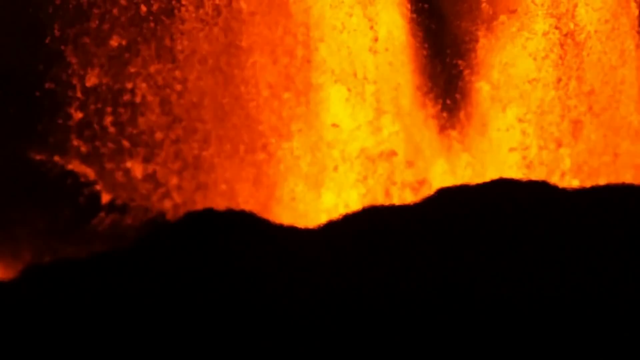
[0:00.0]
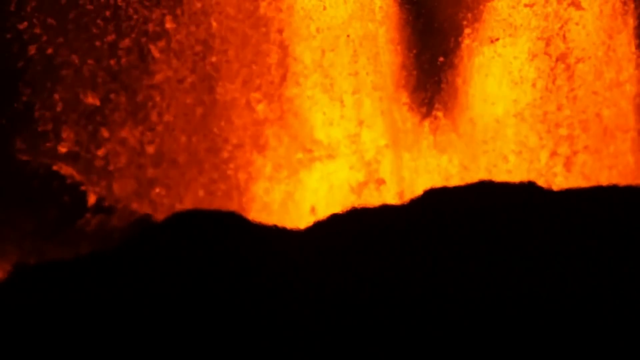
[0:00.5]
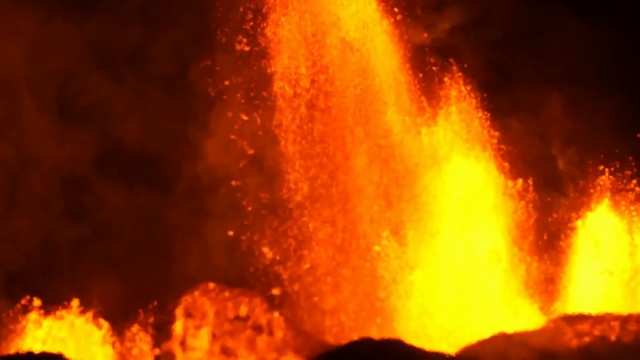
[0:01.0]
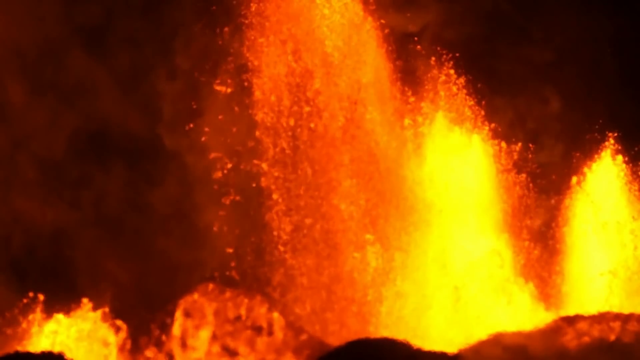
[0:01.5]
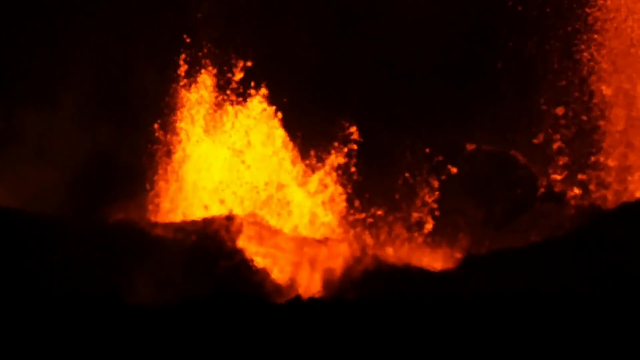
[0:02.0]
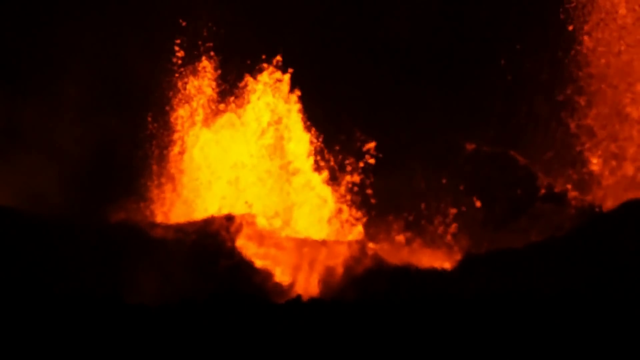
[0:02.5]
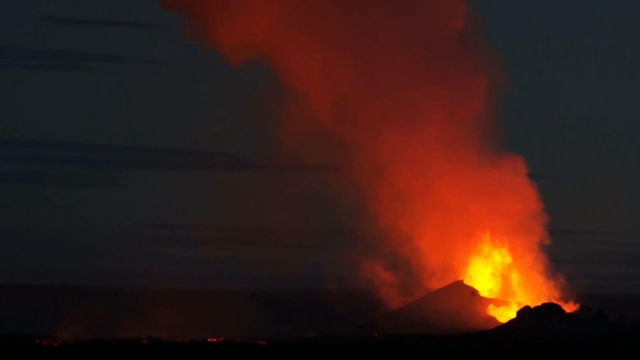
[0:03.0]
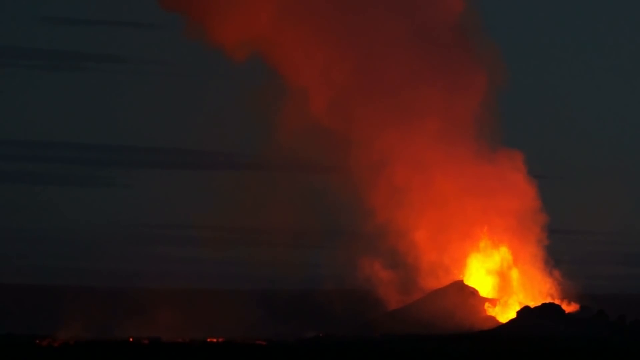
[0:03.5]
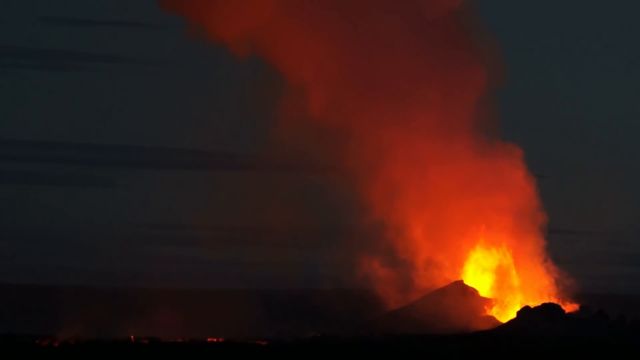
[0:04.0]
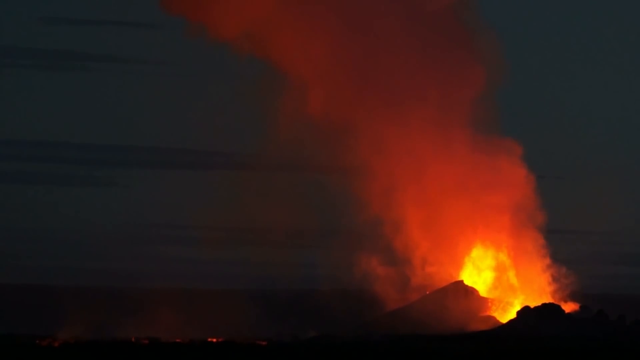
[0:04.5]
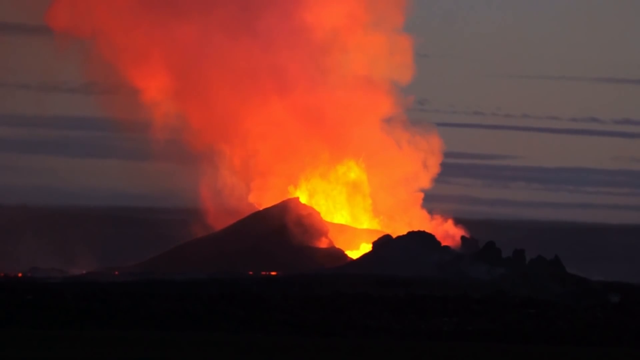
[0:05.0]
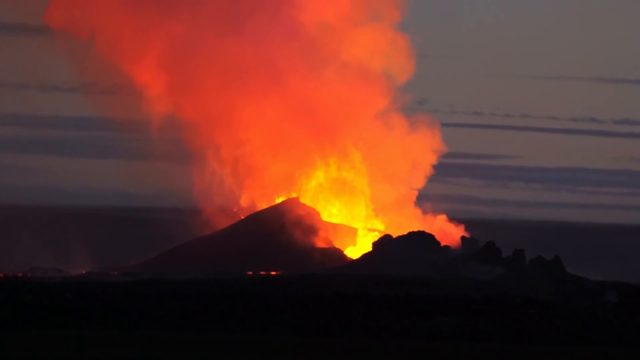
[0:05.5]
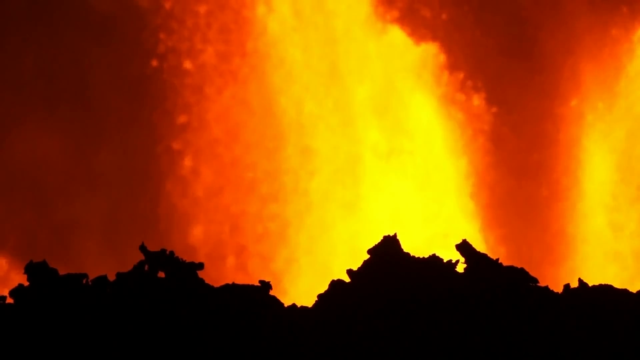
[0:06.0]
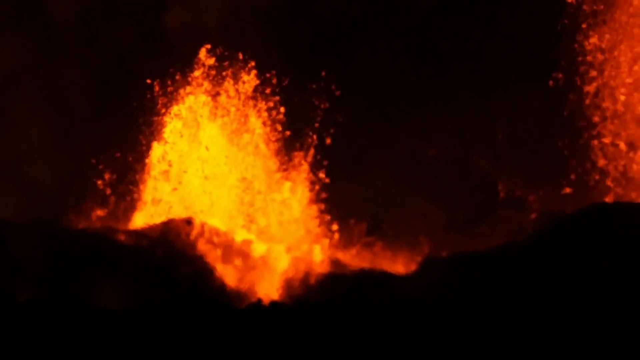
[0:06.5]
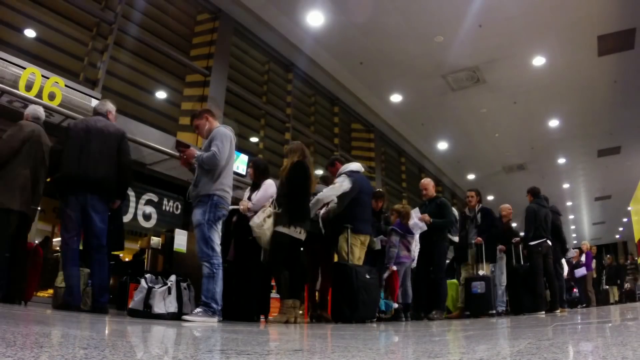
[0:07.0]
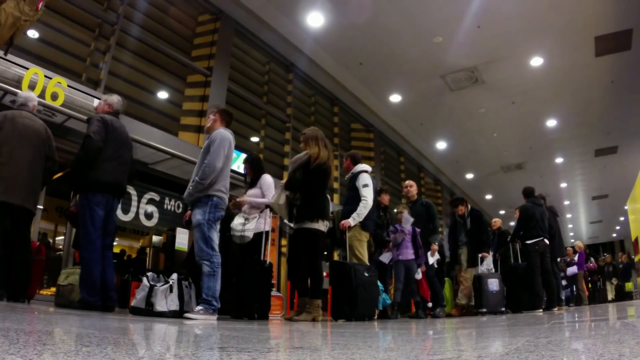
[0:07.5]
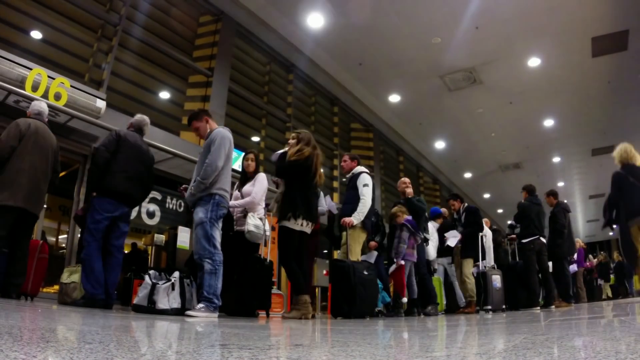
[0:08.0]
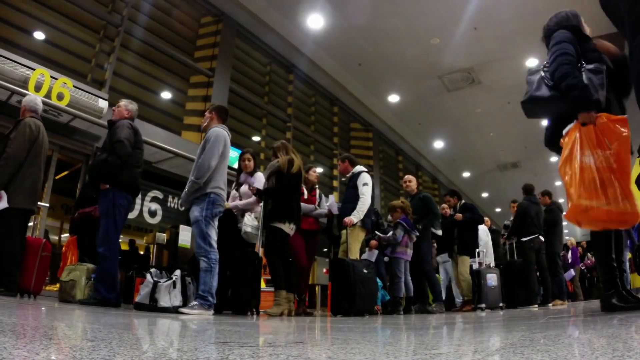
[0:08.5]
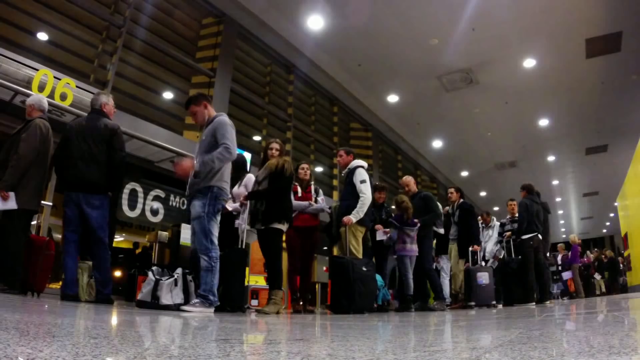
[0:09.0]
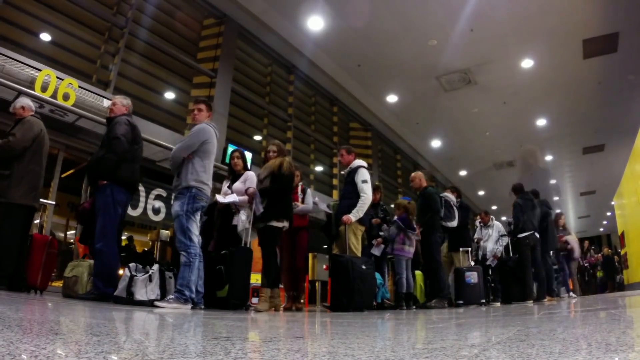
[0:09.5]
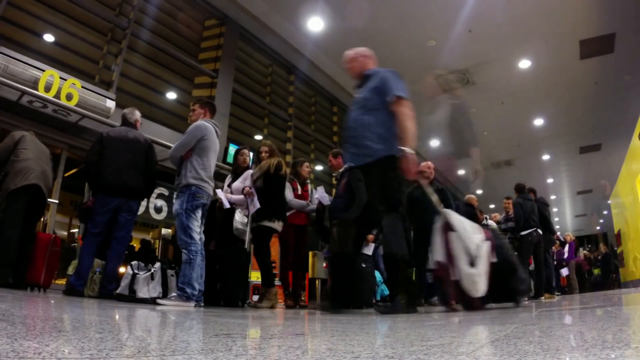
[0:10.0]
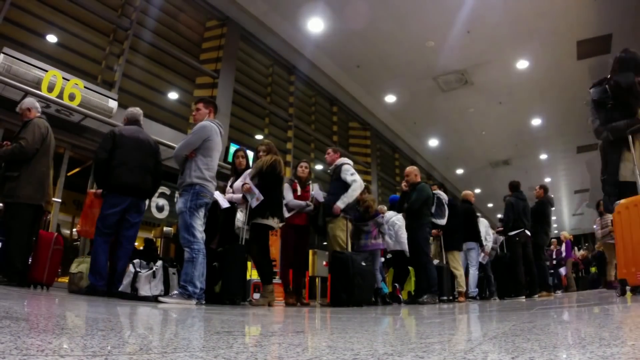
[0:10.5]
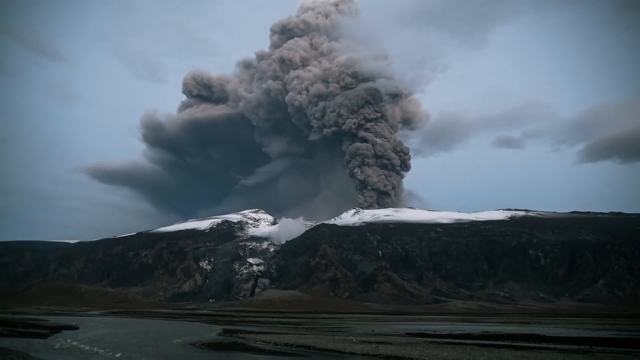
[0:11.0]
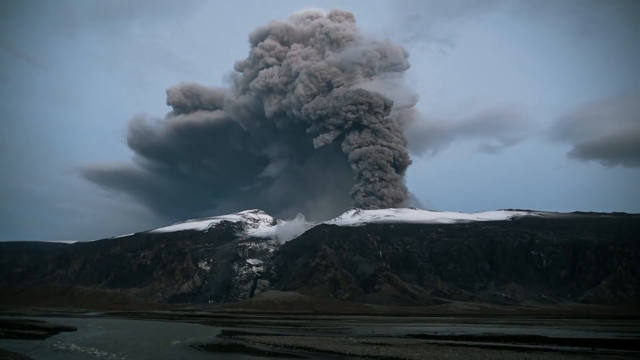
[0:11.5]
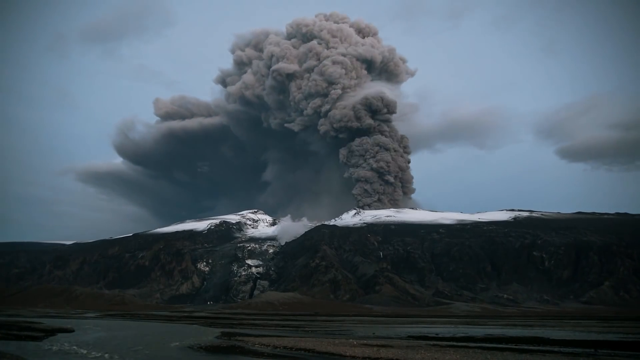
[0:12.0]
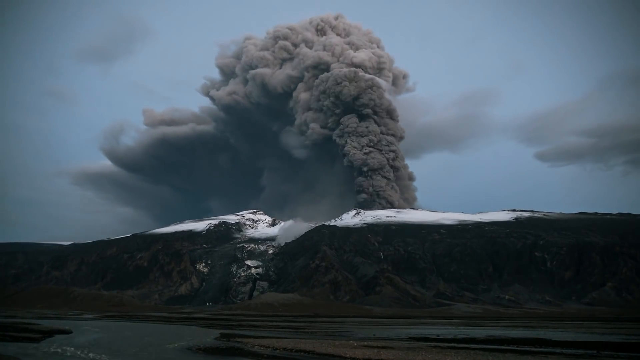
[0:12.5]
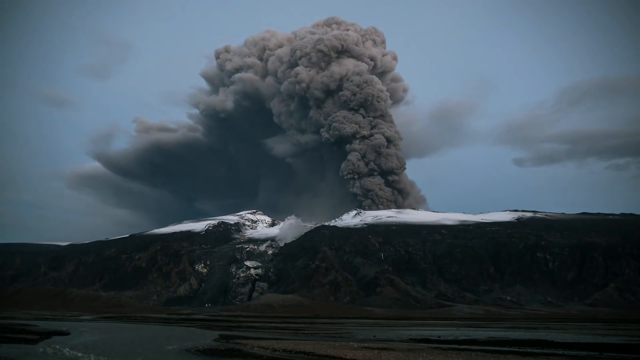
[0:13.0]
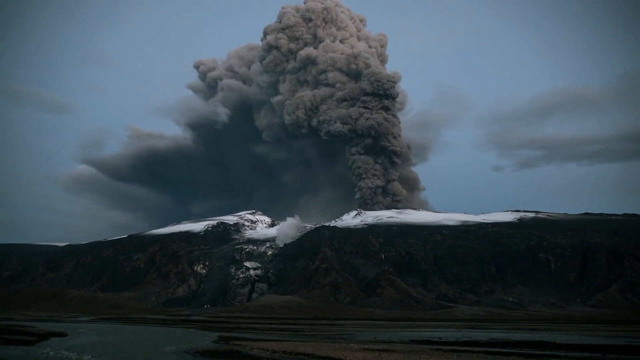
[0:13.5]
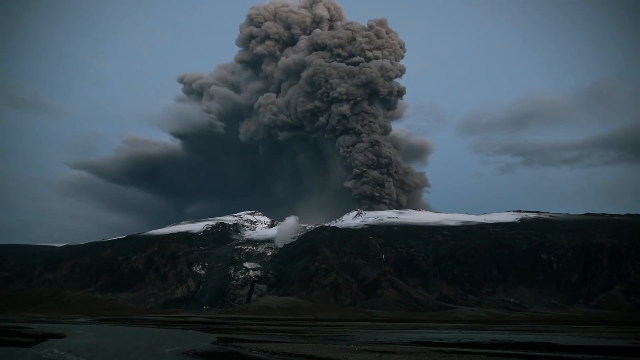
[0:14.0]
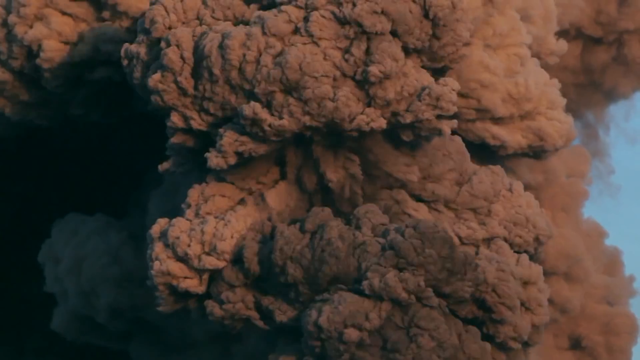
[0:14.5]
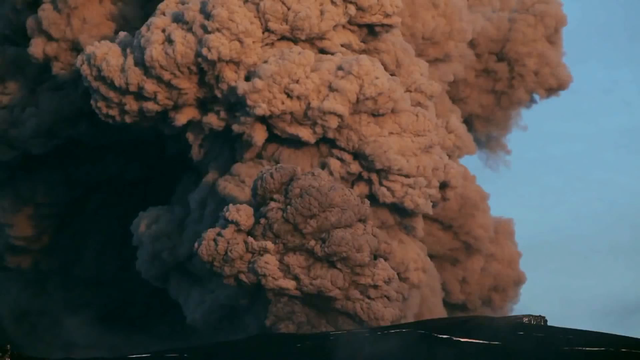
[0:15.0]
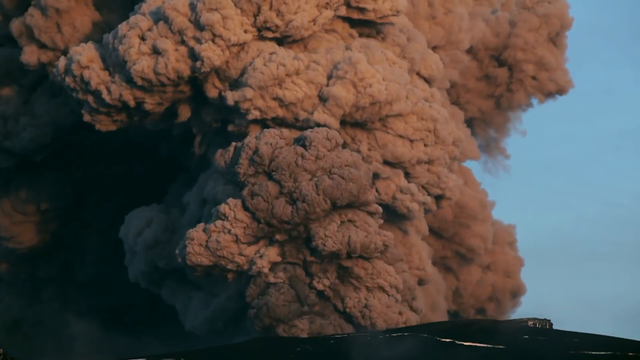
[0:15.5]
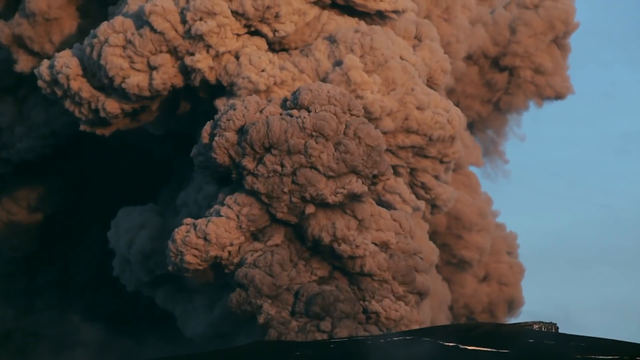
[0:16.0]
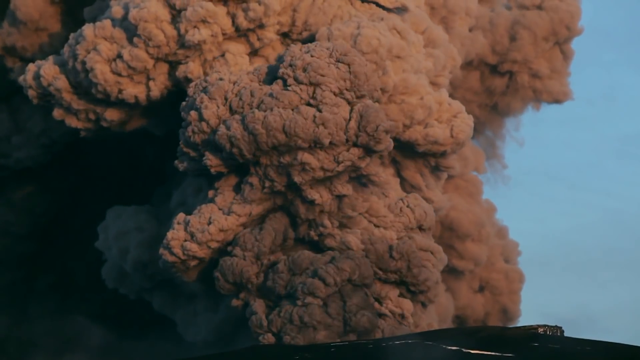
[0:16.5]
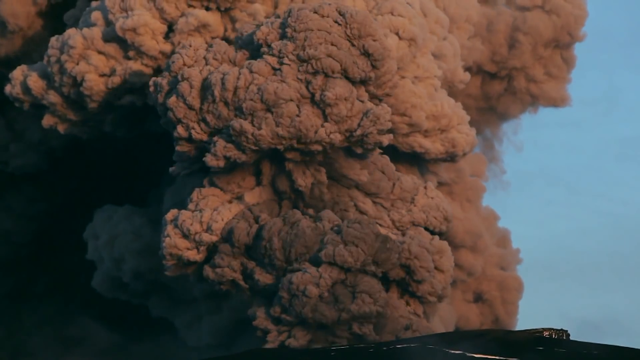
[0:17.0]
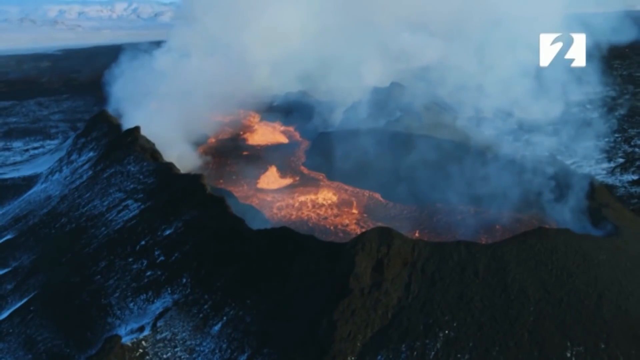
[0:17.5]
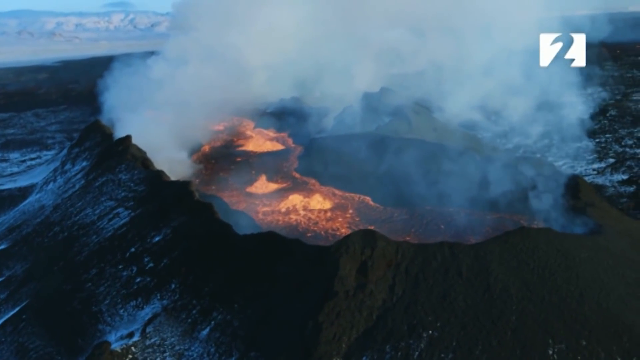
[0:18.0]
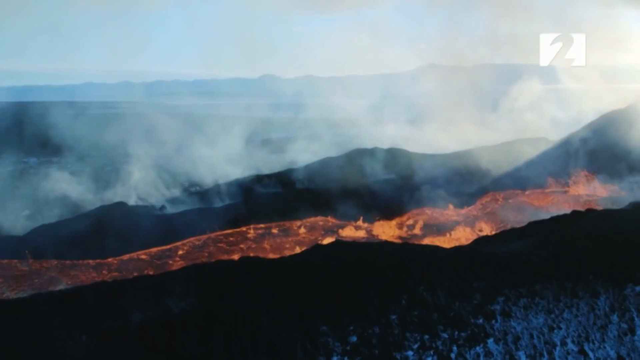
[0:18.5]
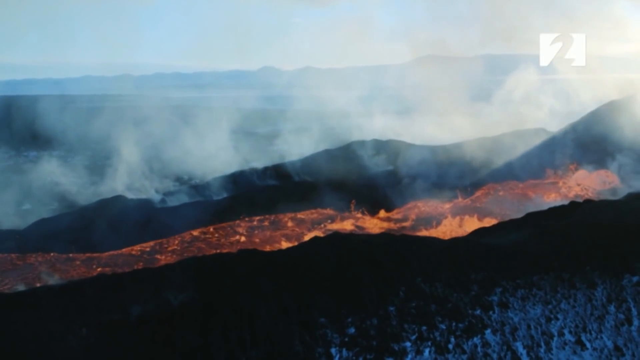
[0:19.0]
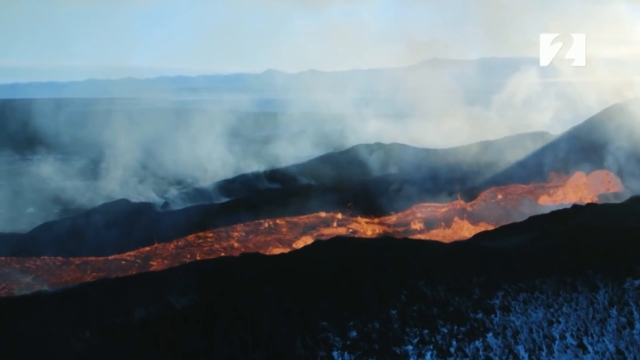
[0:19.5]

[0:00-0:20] An erupting volcano is seen at night, with colorful lava exploding out of the top in orange, yellow and red. The camera zooms out, showing the same image from far away with all the smoke going up into the very dark sky. The camera moves to the top of the volcano, where there is red smoke and yellow flames. The image bounces around to show the flowing lava, then moves to a crowded airport where people are lined up in front of the ticket booths; the footage is fast-forwarded as the people move through the airport. Next comes a daytime image of the smoking volcano, with grey smoke and a light blue sky, and a white substance all around the top of the volcano. This footage is also fast-forwarded. The camera is then zoomed in and the smoke is brown. It shows the mouth of the volcano with the lava inside, and the final image is of lava flowing down the mountainside in the daytime.